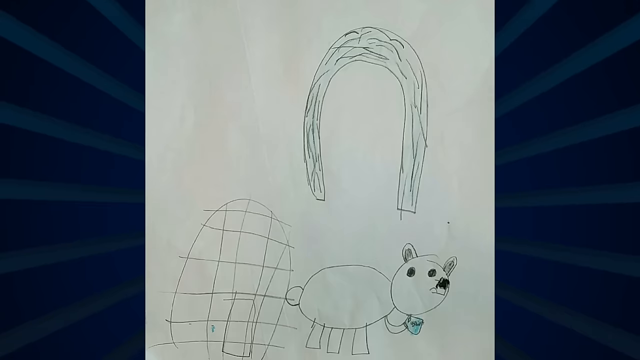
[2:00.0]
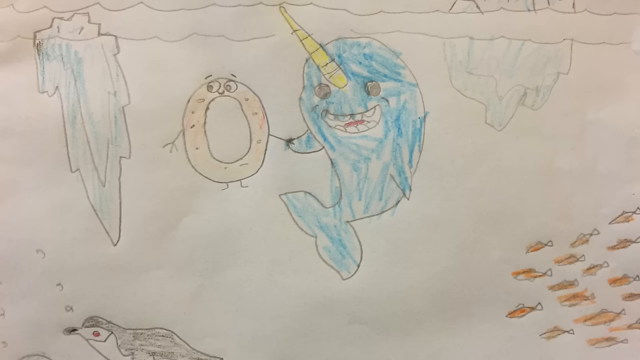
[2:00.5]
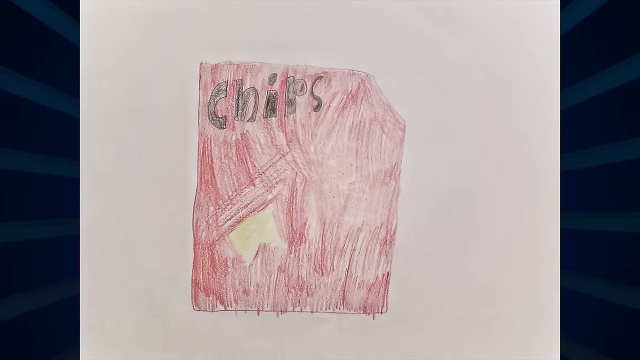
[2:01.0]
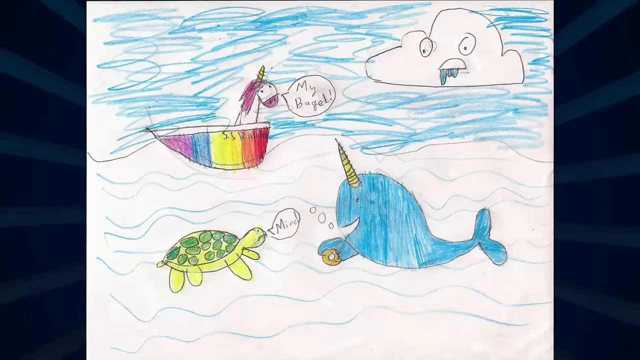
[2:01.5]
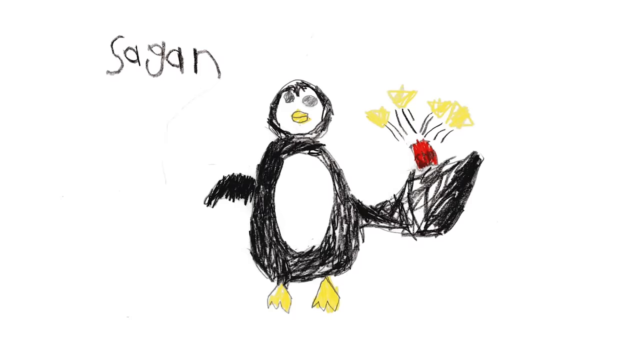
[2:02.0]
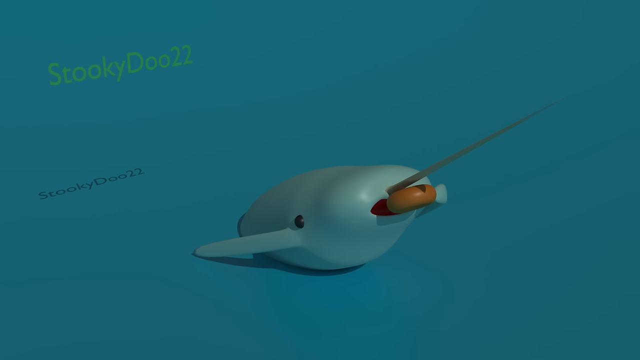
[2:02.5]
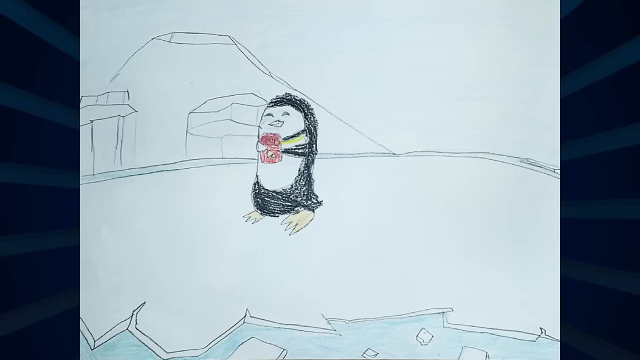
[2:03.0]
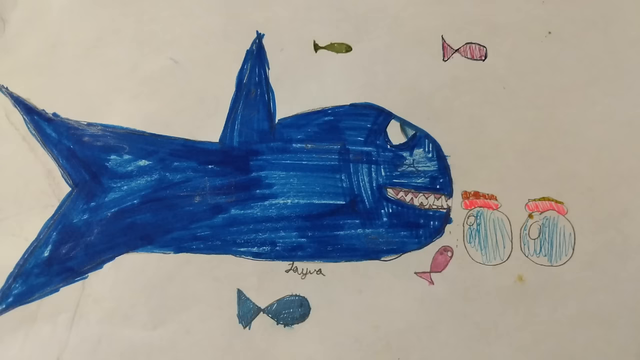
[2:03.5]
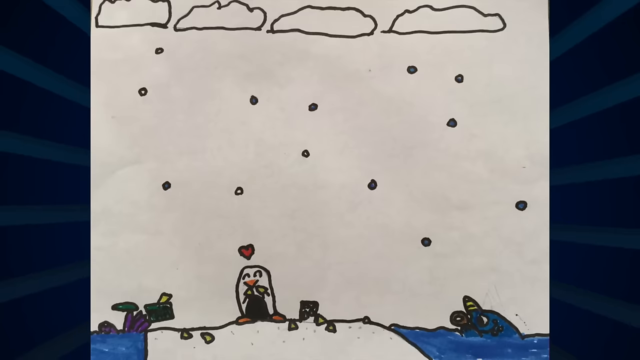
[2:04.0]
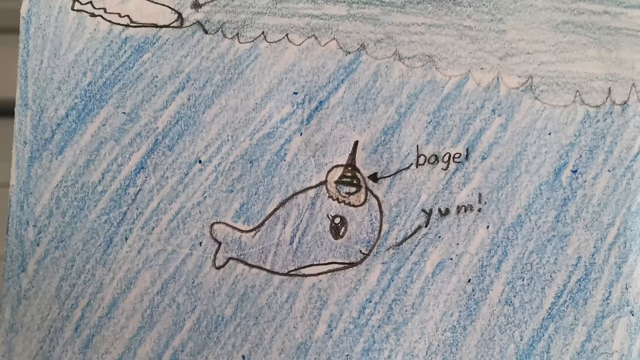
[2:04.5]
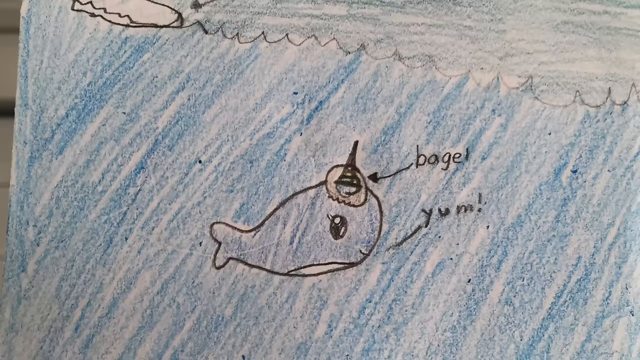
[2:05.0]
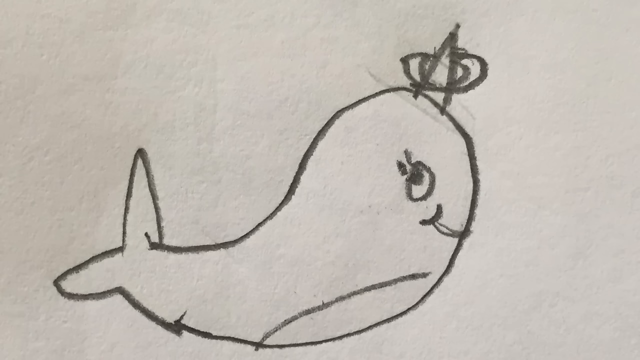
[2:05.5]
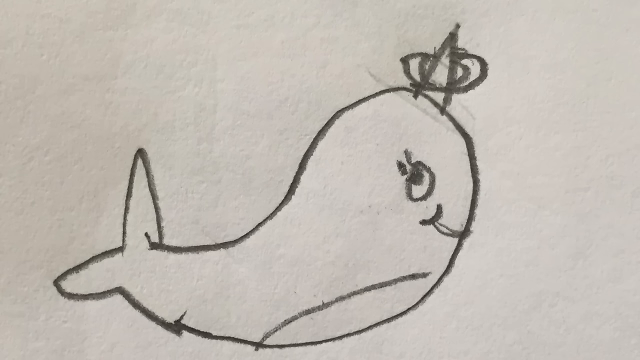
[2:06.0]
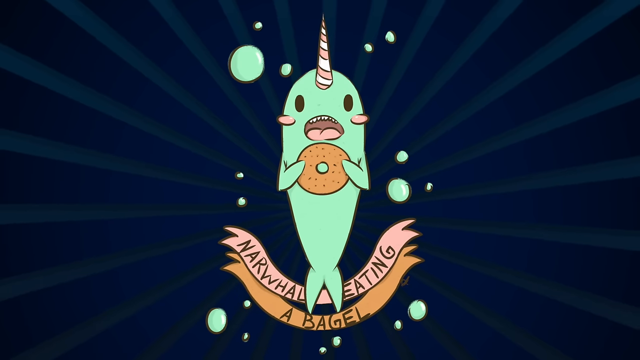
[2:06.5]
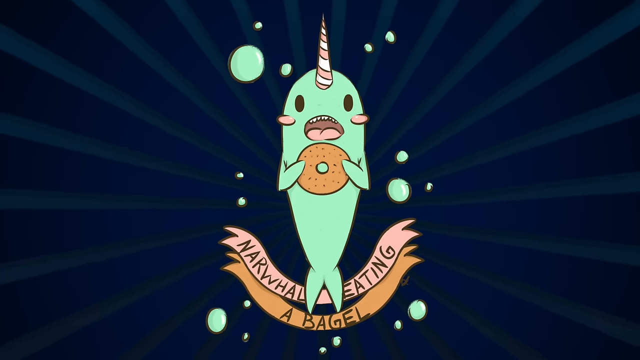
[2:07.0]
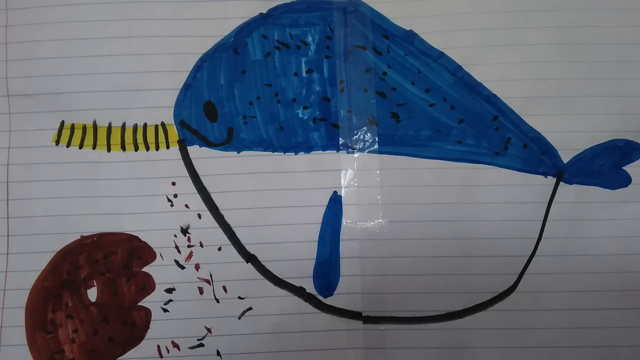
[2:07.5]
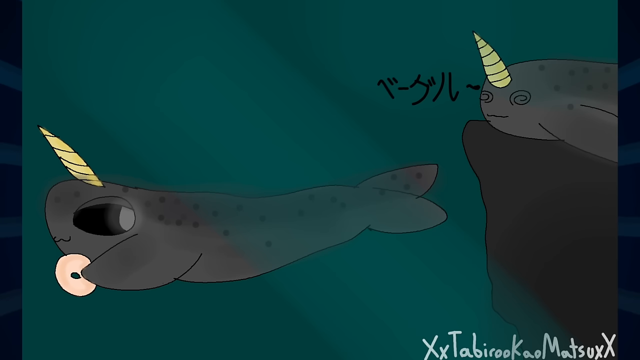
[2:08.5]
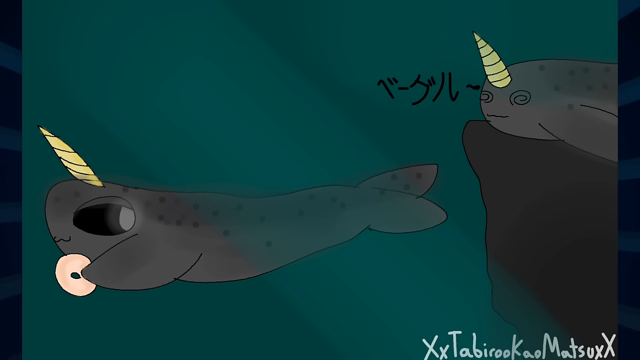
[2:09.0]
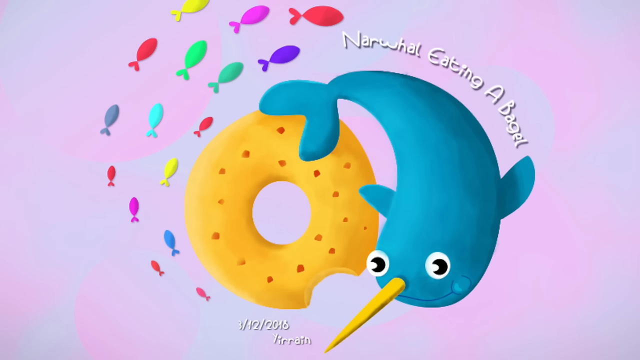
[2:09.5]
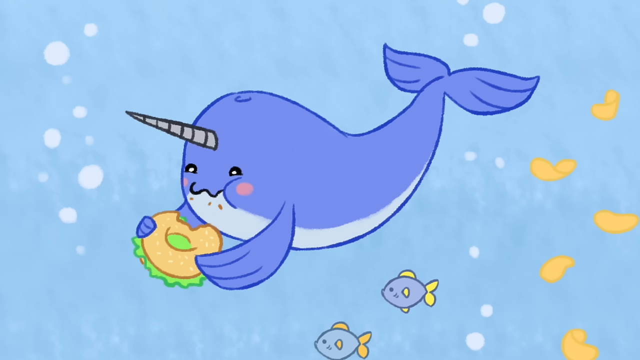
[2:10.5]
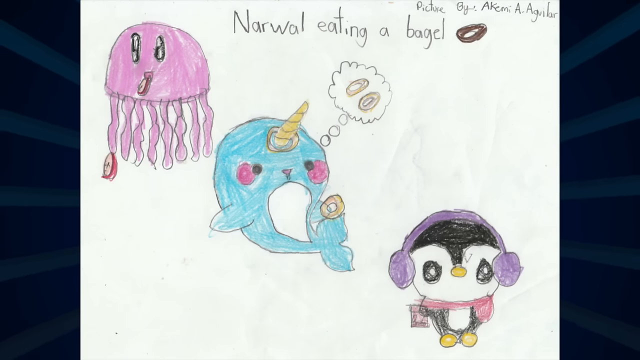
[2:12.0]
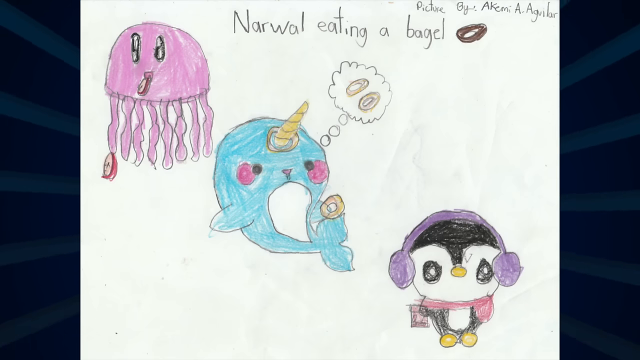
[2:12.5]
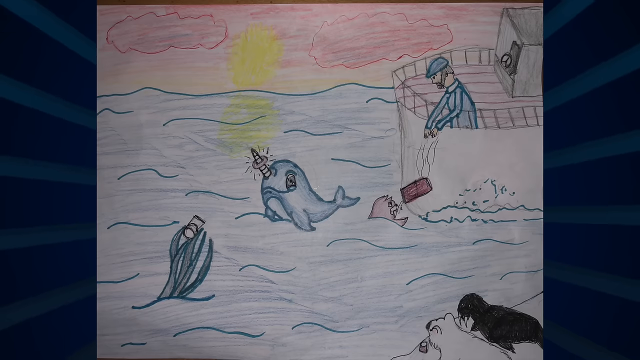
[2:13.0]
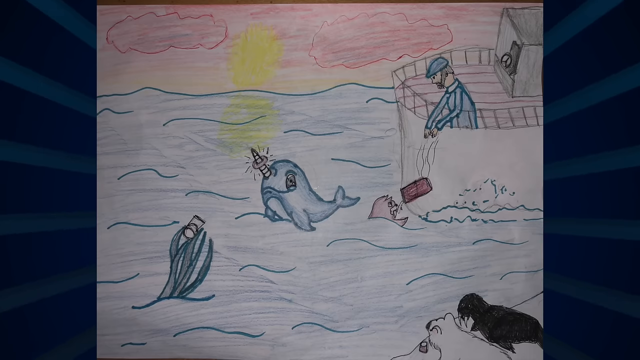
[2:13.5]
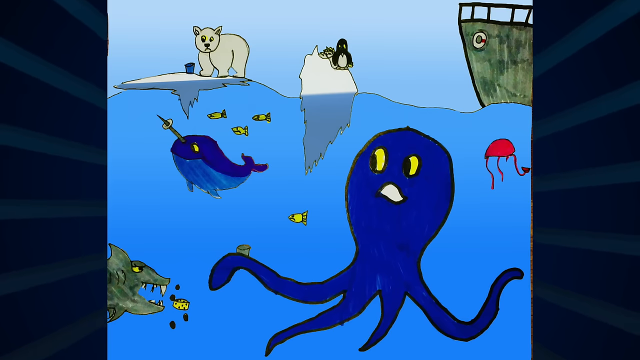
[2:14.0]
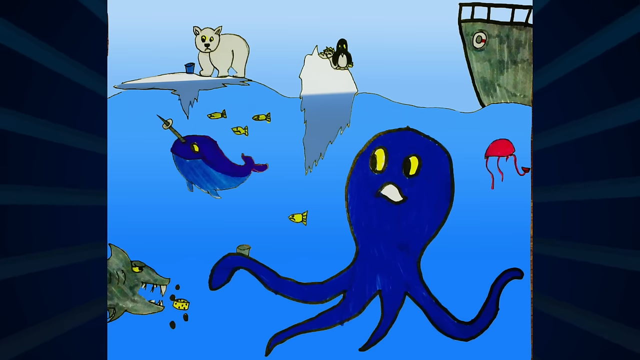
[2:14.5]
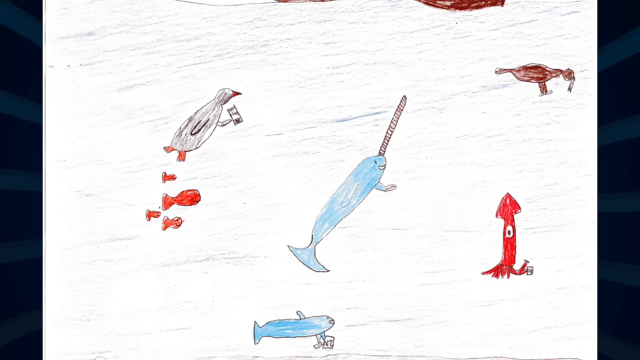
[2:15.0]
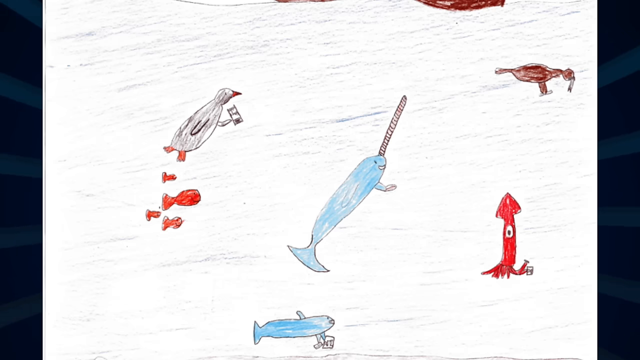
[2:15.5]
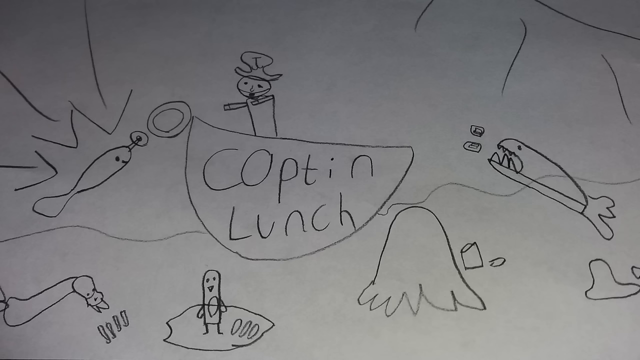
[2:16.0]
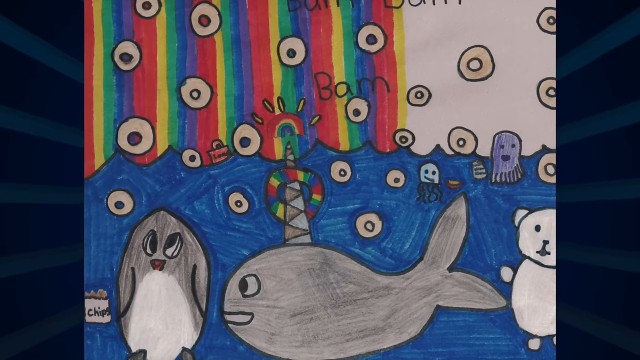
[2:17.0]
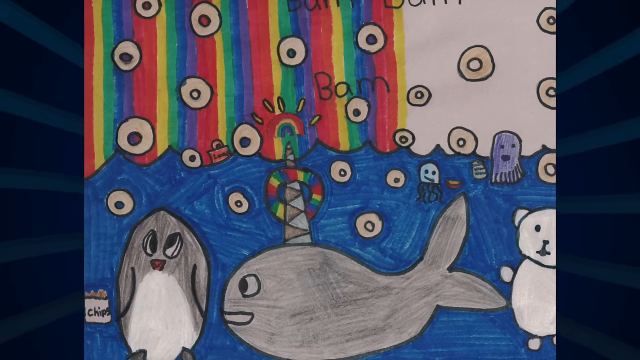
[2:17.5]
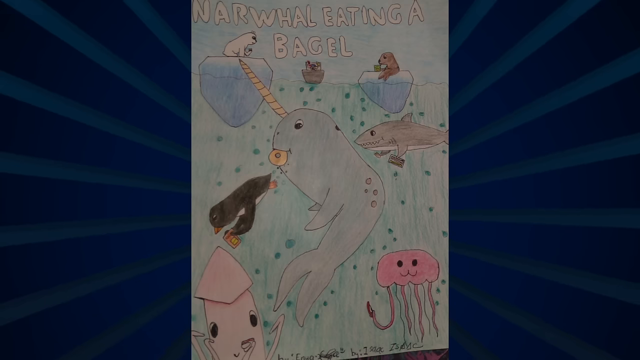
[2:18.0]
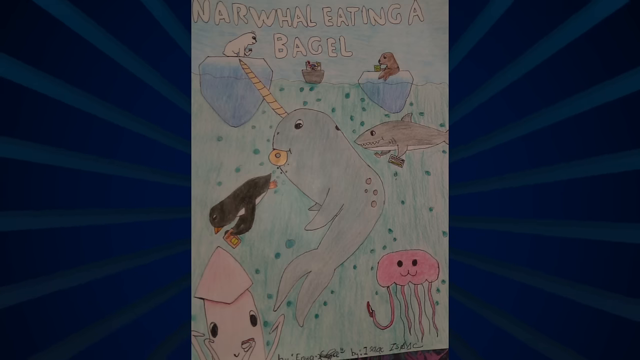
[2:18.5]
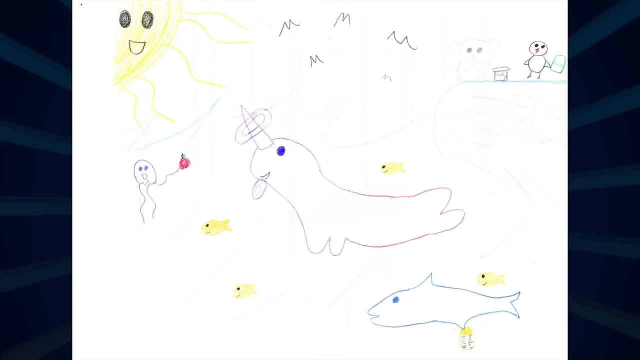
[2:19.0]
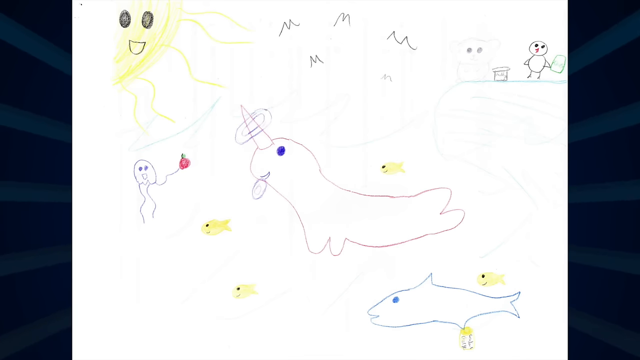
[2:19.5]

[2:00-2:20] A narwhal happily holds the hands of a bagel and smiles. Next, a penguin holds a red bag of chips with yellow chips popping out of the top. Then a narwhal eats a bagel, followed by a penguin happily holding a red bag of chips. A shark smiles happily with two food items near it. The next drawing shows a happy penguin while it snows, with the narwhal and its bagel to the right side. Multiple drawings show the narwhal enjoying the bagel. One shows the narwhal swimming with the bagel while another looks at it in shock. One shows the narwhal smiling next to a large bagel with a bite taken out and colorful fish near it. Another shows the narwhal eating a bagel with lettuce on it. Another shows the narwhal holding a bagel while thinking about more bagels, a penguin wearing purple headphones with chips, and a pink squid eating an apple slice and holding another with its tentacle. Next, a fisherman throws food over the side of the boat into the sea while the narwhal looks happy with a bagel on its horn. The next few drawings show a shark, octopus, squid, narwhal, penguin and polar bear, all with different food items.